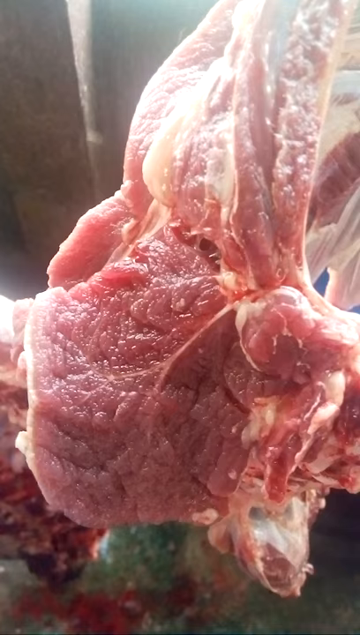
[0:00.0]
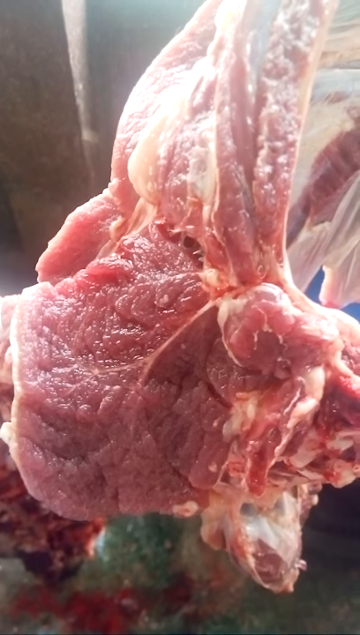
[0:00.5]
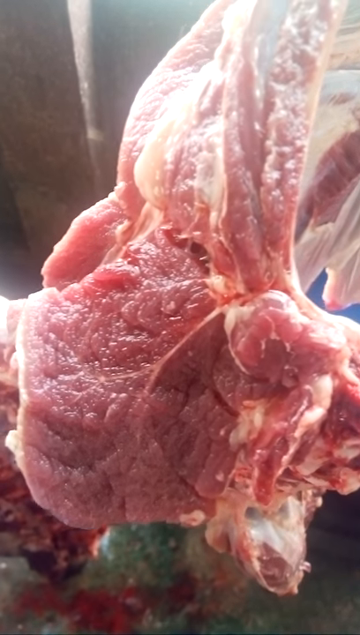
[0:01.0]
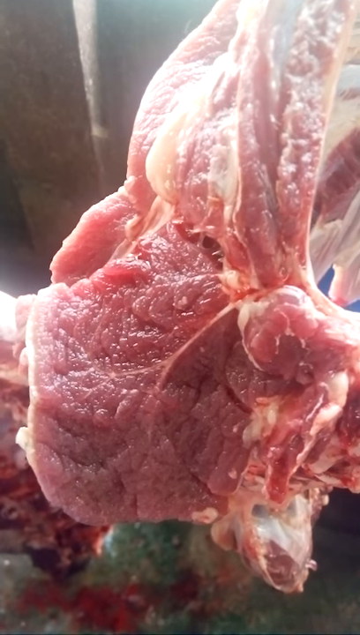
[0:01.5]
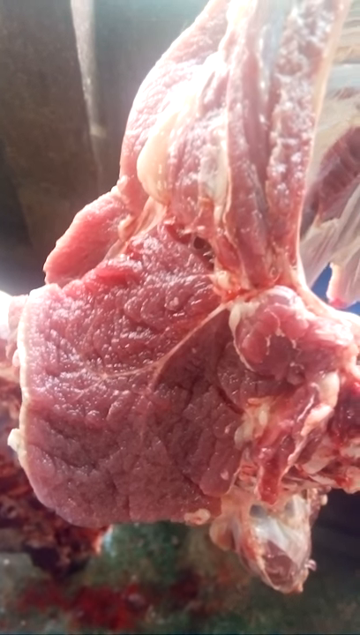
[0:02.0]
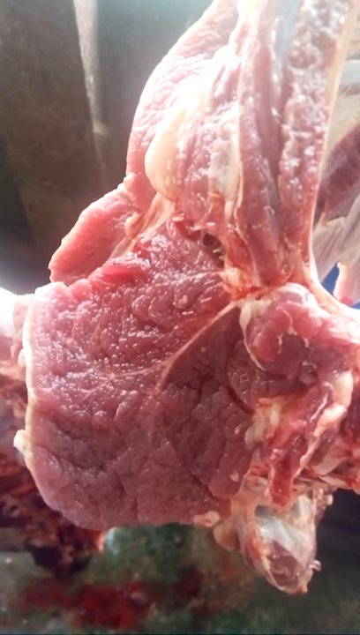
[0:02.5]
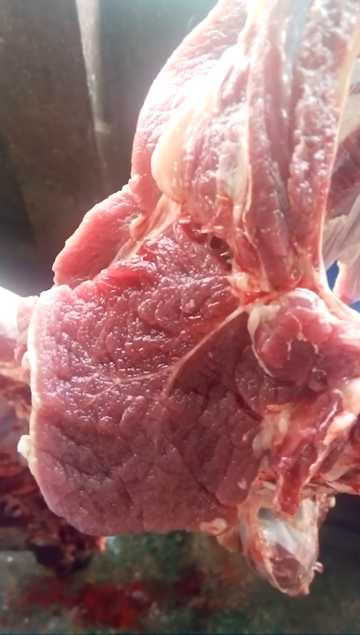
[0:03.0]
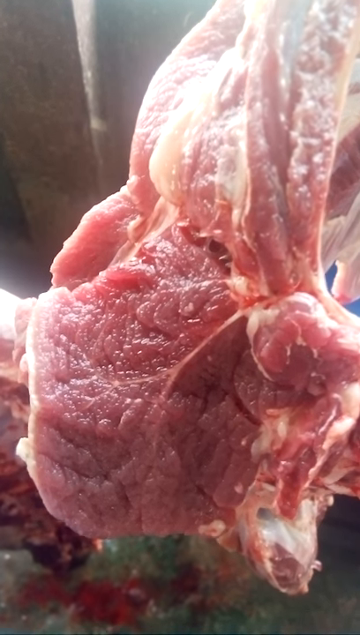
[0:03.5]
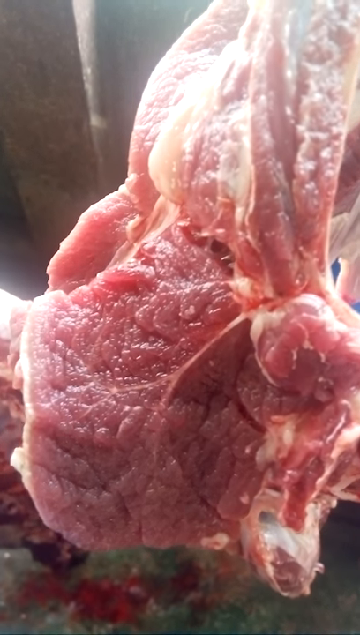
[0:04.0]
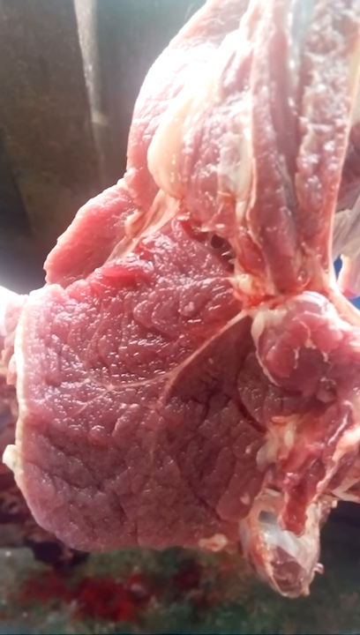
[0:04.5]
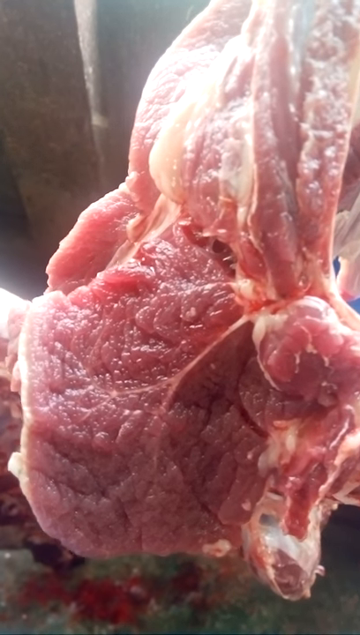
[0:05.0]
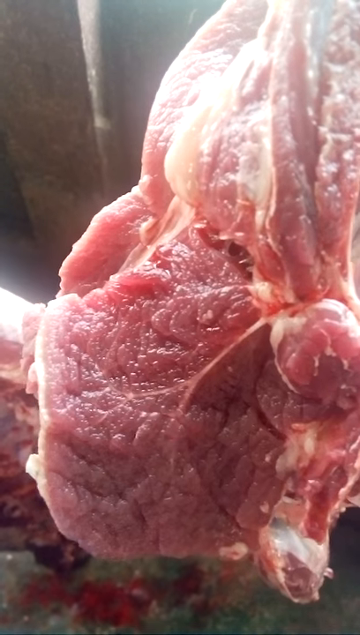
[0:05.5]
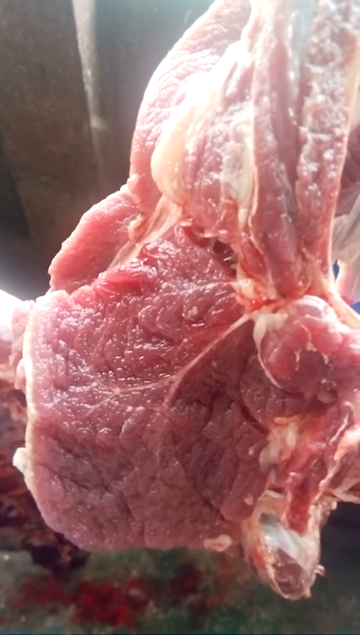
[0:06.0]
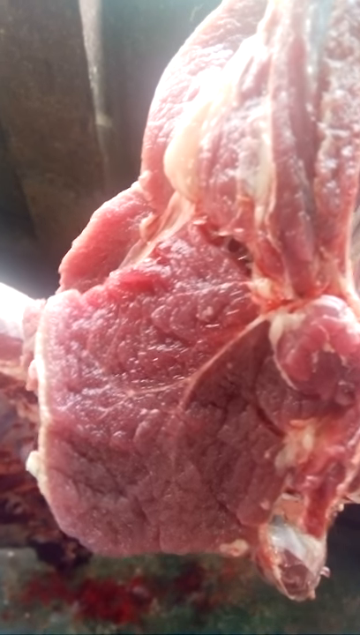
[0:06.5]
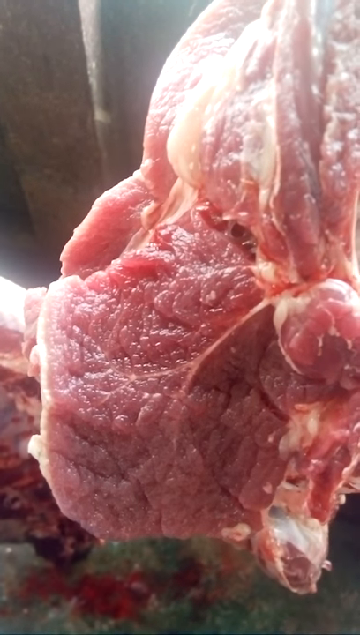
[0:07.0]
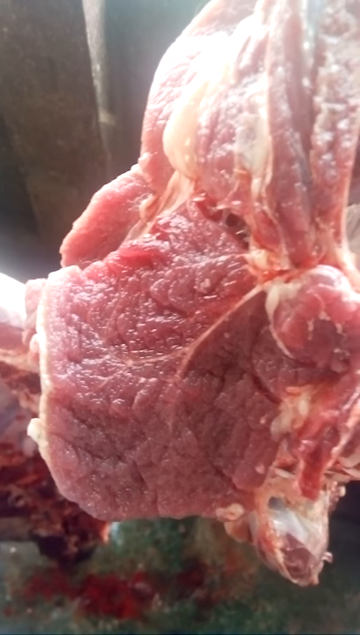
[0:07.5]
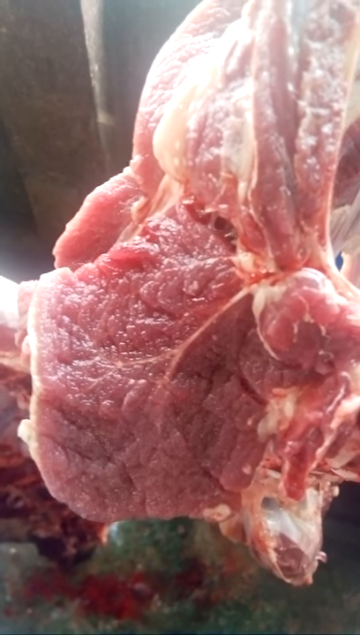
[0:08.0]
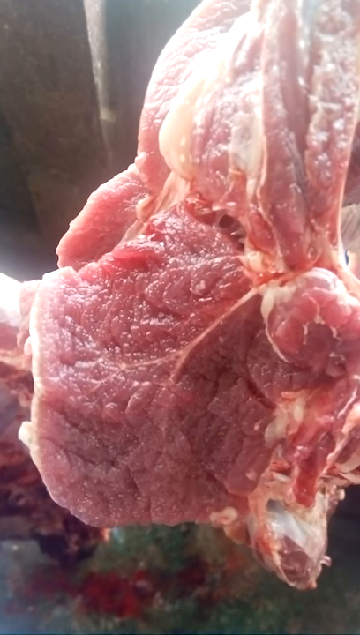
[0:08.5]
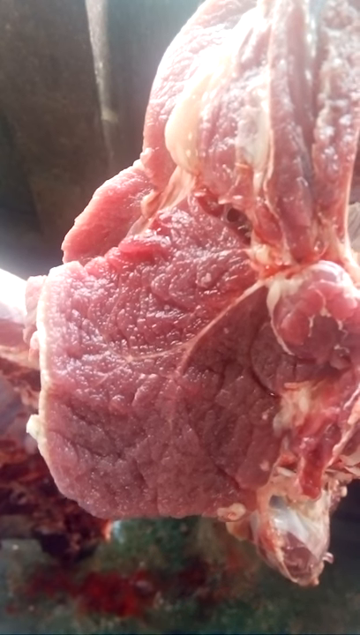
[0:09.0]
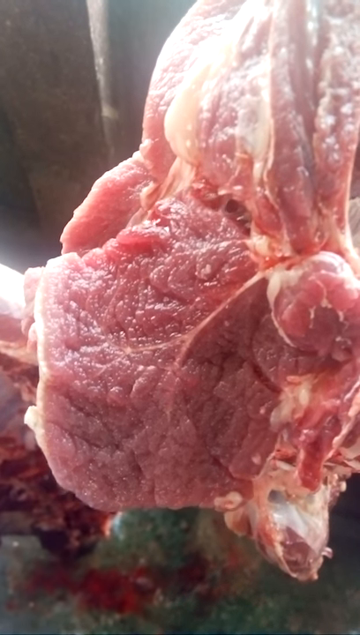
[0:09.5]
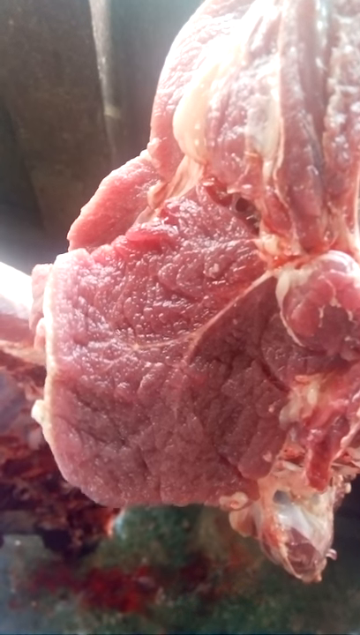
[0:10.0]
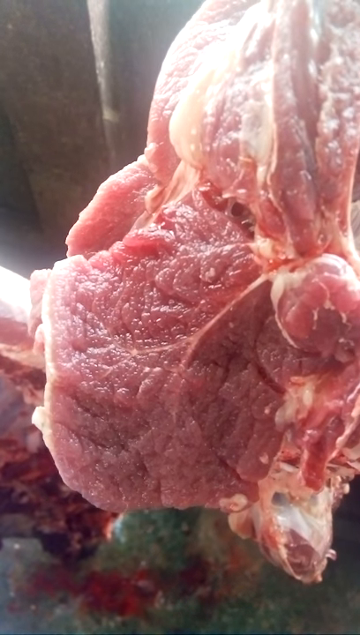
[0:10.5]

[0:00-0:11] A close-up shows a cut section of meat that appears to be hanging outside. The piece is disjointed and irregular in shape, and oddly, sections of the meat seem to still be moving, almost as if it were still alive. In three or four sections the meat can be seen rising and falling, almost like a heartbeat. It is unclear which part of the animal the piece comes from, but it is hanging outside or at least in an area exposed to the outdoors, with very strong light shining down on the meat from above. The shot stays on a zoomed-in close-up of this section of meat. Quite a lot of fat is still visible on the meat.